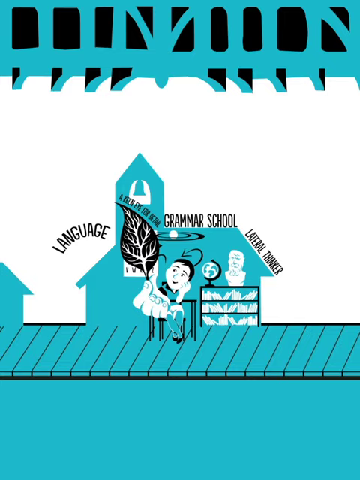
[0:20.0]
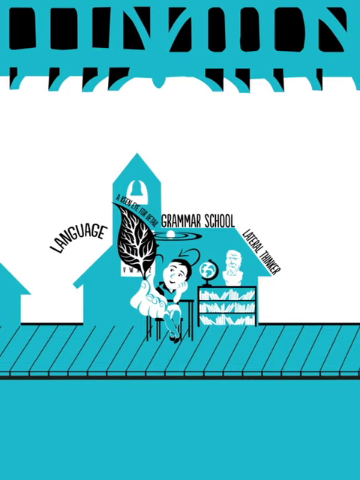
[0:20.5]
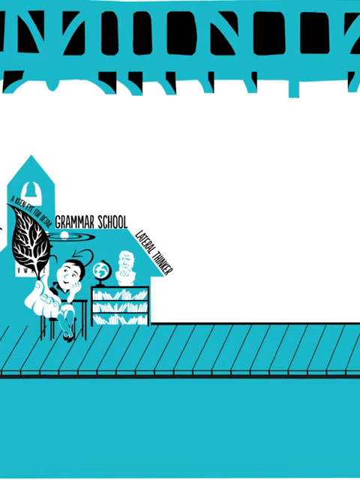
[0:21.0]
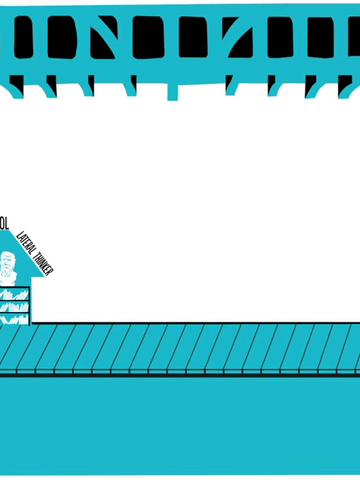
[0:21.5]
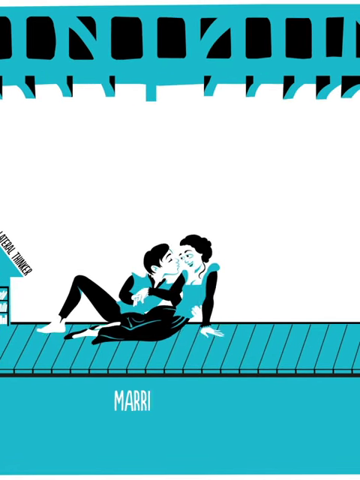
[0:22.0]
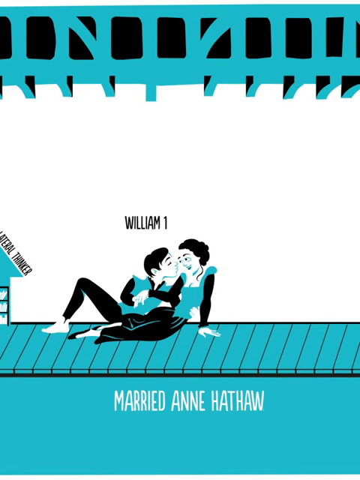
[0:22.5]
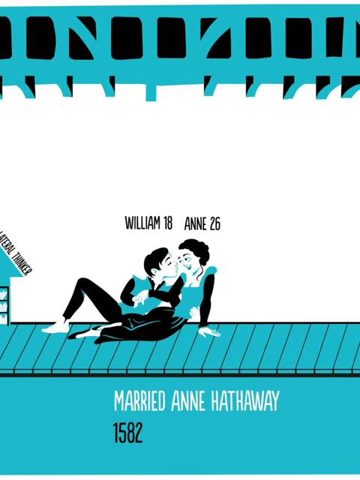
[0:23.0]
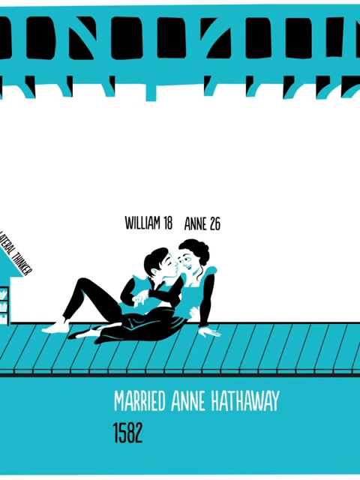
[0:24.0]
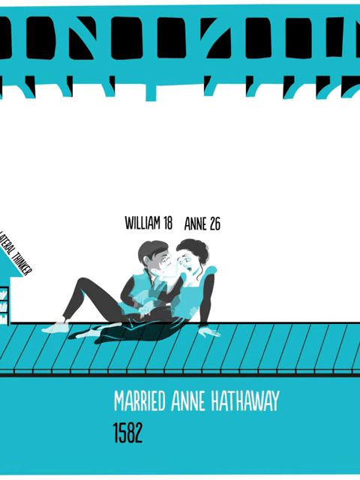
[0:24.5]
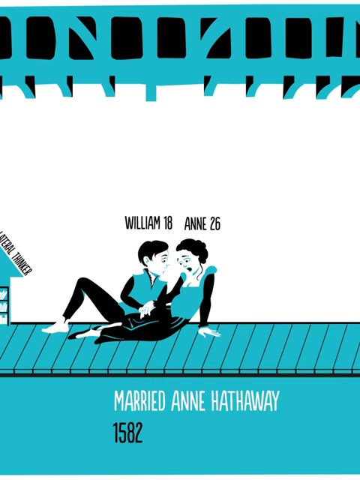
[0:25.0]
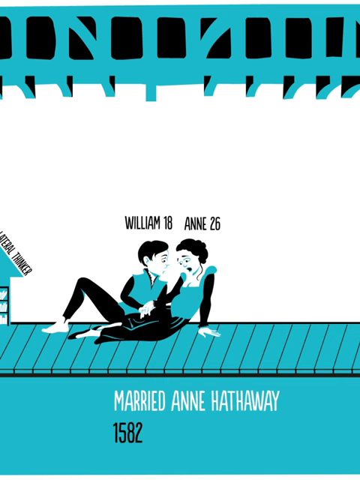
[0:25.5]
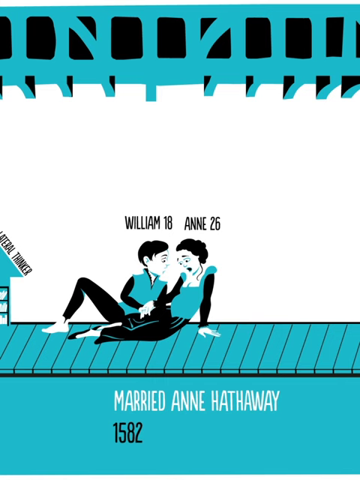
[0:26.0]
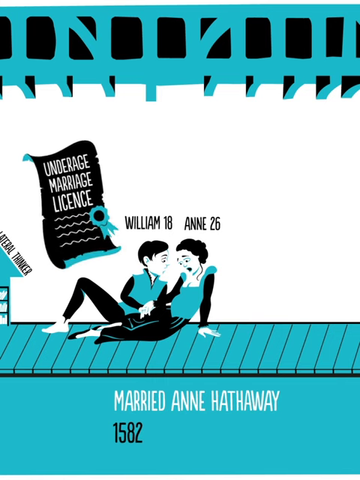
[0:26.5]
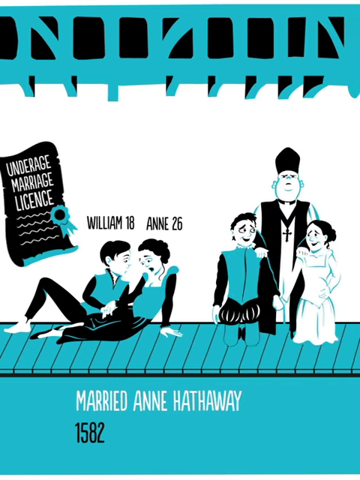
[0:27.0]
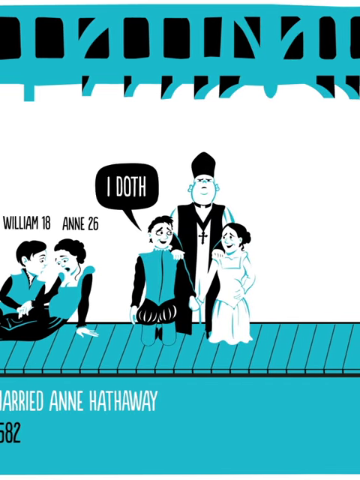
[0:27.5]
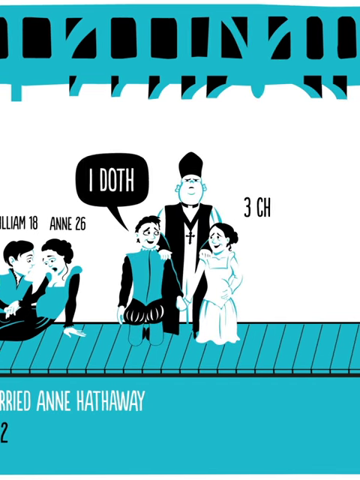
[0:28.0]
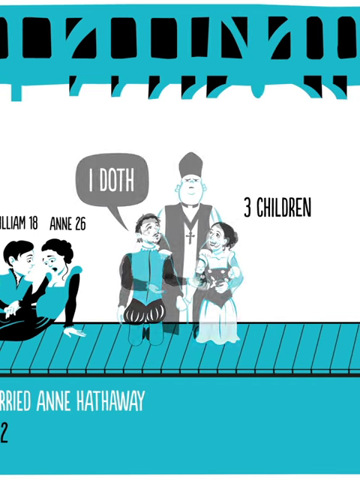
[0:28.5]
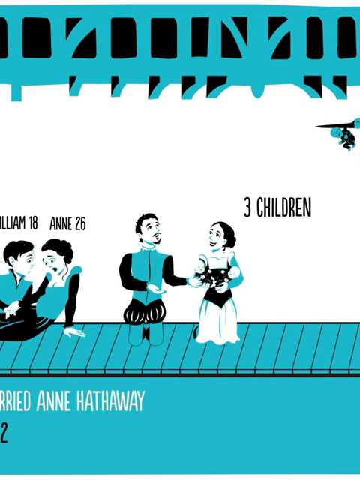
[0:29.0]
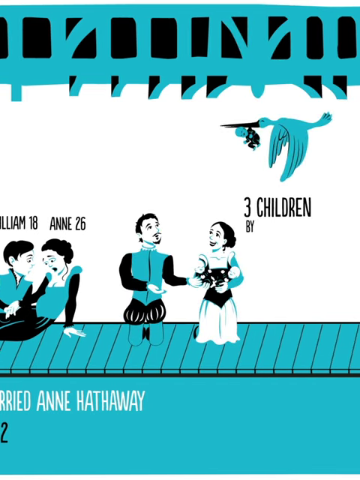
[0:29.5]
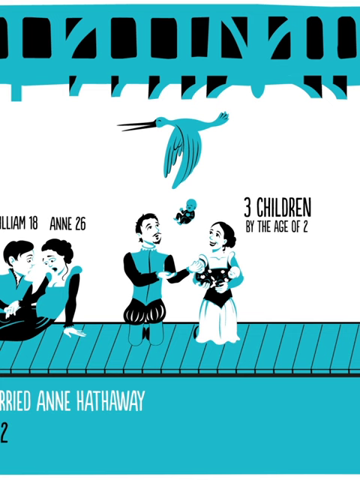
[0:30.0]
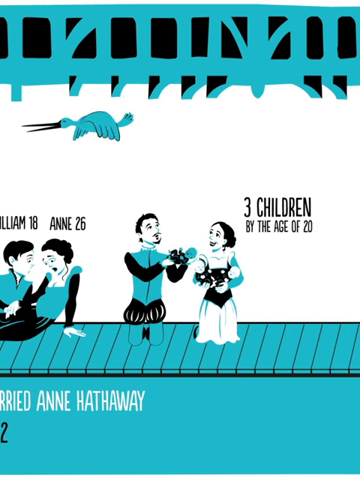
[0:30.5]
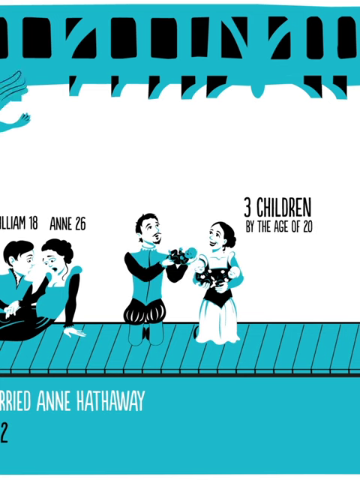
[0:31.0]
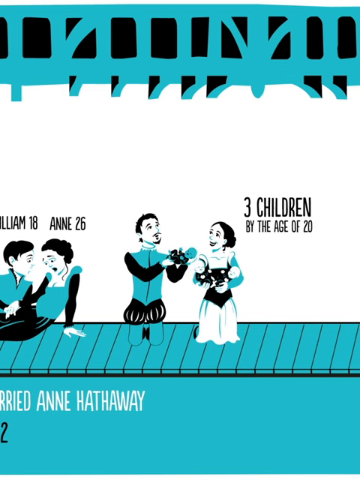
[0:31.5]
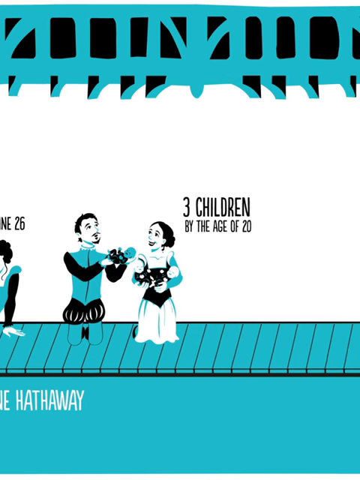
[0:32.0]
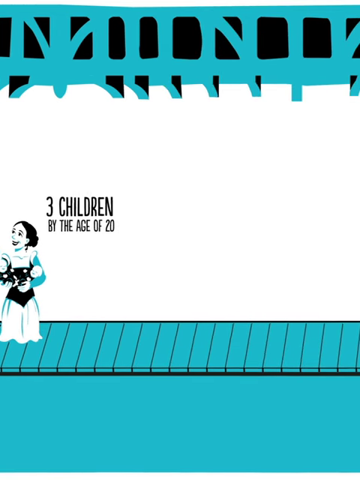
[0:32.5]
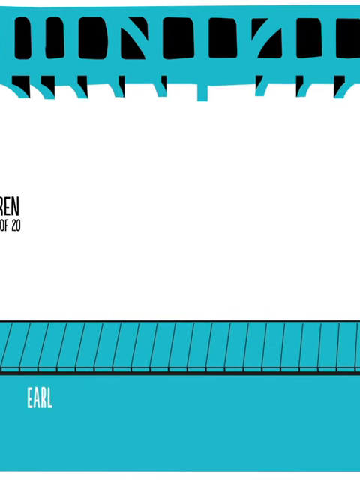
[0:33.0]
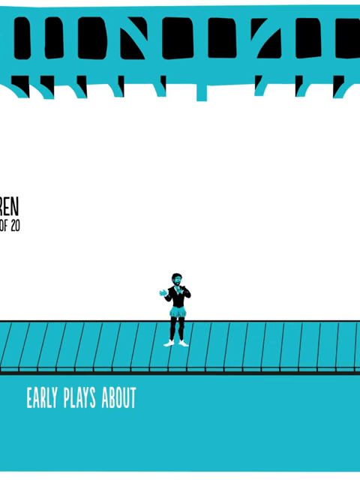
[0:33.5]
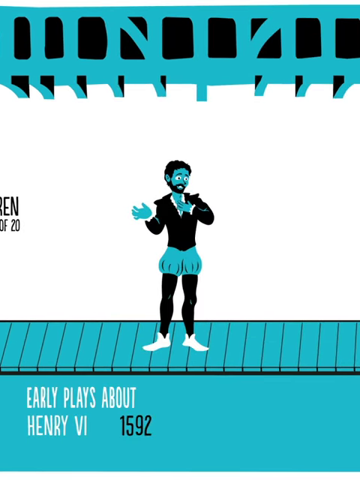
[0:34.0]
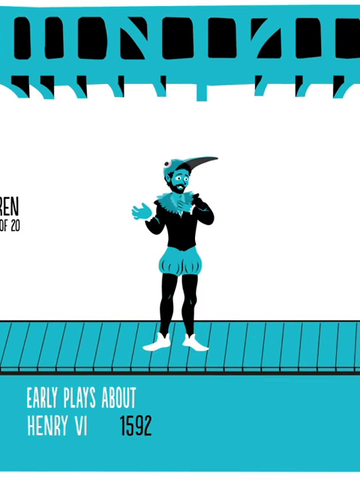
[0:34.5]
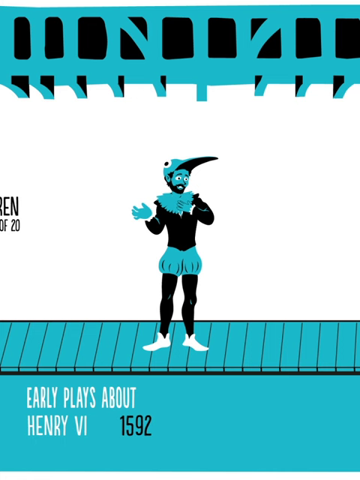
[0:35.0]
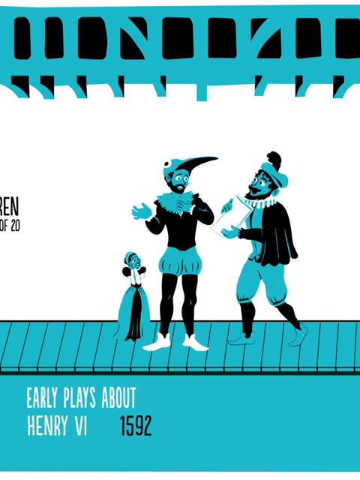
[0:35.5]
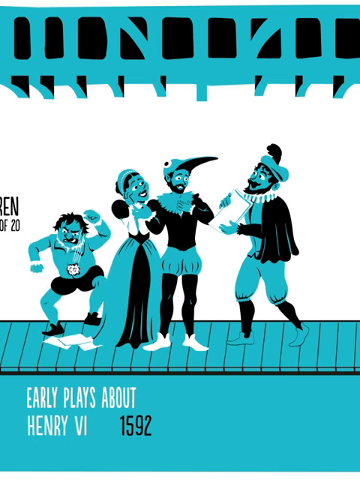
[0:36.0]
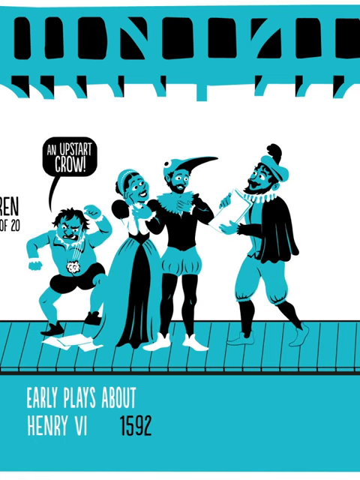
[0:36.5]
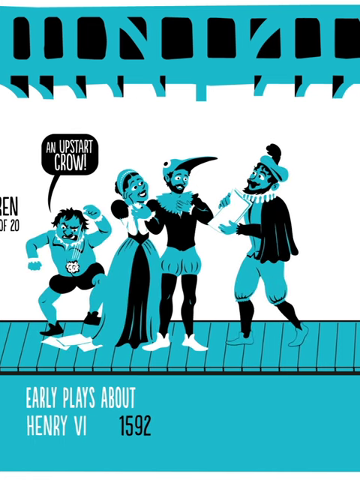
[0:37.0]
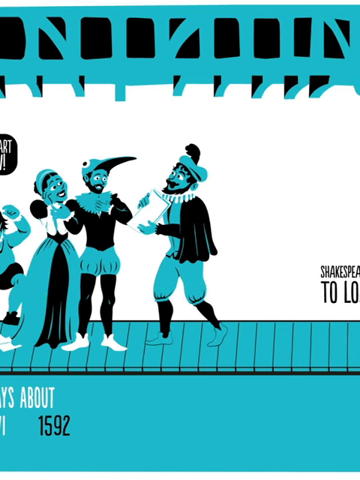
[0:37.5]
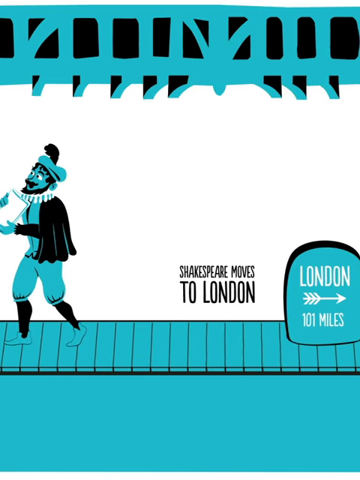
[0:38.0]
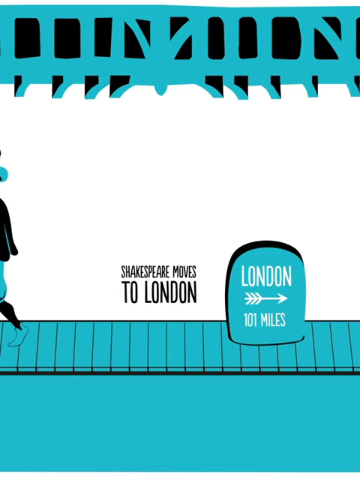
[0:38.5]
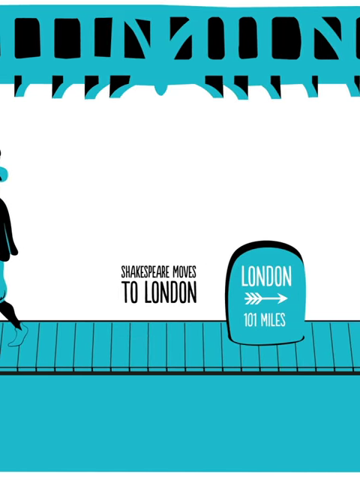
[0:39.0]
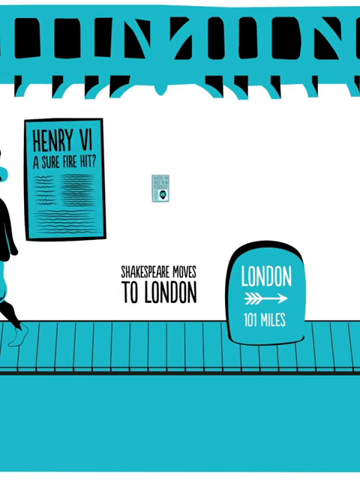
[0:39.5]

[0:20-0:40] The animation, entirely in blue, black, and white, shows scenes from Shakespeare's life in chronological order as small scenes moving across a stage. First there is a silhouette of the side of a building with a bell in its steeple, labeled "Grammar School" across the roof. In front of it is a bookcase with a globe and a bust on top, next to a boy seated at a desk who holds up a large black leaf. The words "Language" and "Lateral Thinker" appear on either side of the building silhouette. The camera moves to the right to a graphic of a reclining man and woman. The woman rests her left hand on the ground, and the man is next to her holding her right hand in his. Their clothing looks like it is from the 16th century. Below them on the stage it reads "Married Anne Hathaway, 1582," and above them it says "William 18, Anne 26." A graphic that looks like an unfurled scroll reading "Underage Marriage License" appears behind them. A new graphic shows the same couple kneeling in front of a priest, who stands behind them, and a black text bubble next to him says "I Doth." The text "3 Children" appears on the opposite side; the priest disappears and the woman holds two babies in her arms. A blue stork flies above them and drops another baby into the man's hands. The words "By the age of 20" are added under "3 Children." The camera moves to the right to a graphic of a man in blue, black, and white wearing clothing from the Renaissance, with text reading "Early plays about Henry VI, 1592" on the stage below him. Other people in period costume appear around him: one male holds up a piece of paper, a female holds her head in her hand, and an angry man stomps on papers. A text bubble appears that says "An Upstart Crow." The camera moves right again to a mile marker that says "London, 101 miles" with an arrow pointing to the right, and text next to it reads "Shakespeare Moves to London." Behind it appear graphics that look like the front pages of newspapers, with headlines reading "Henry VI, A Sure Fire Hit?" and "Discover the Great New Playwright."